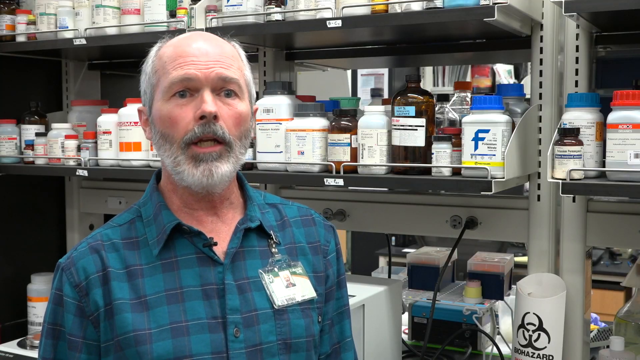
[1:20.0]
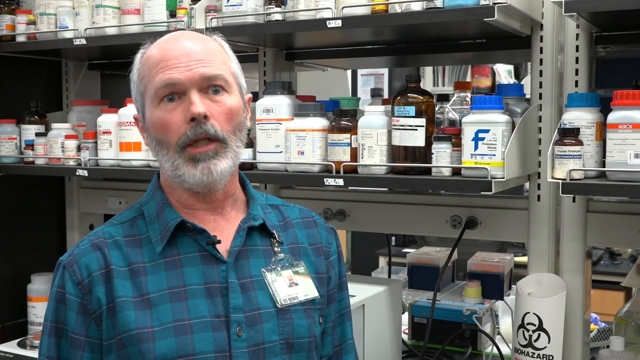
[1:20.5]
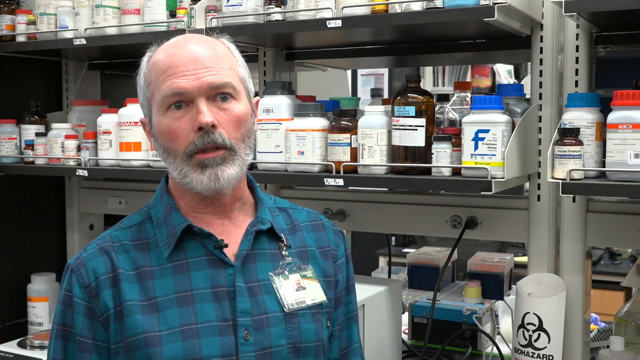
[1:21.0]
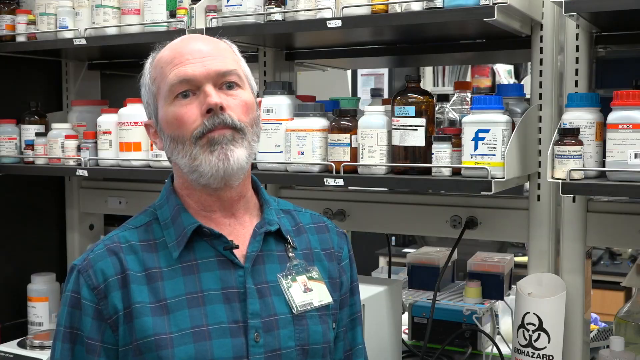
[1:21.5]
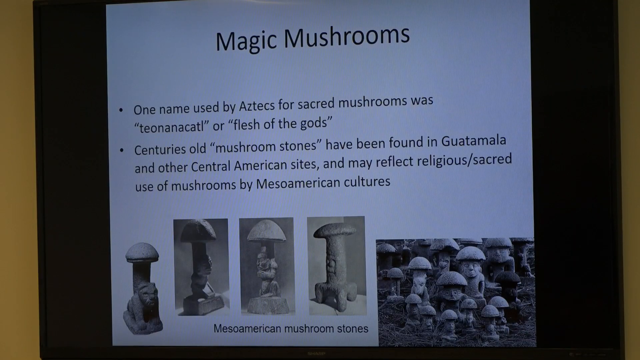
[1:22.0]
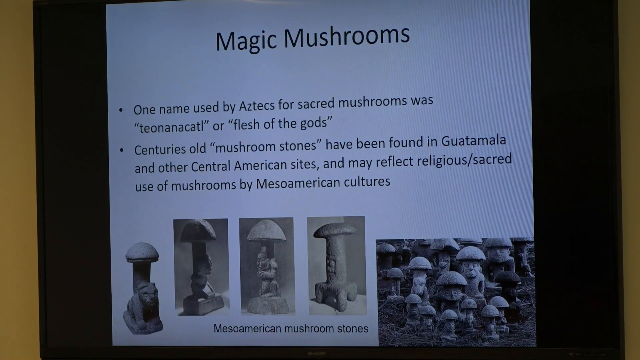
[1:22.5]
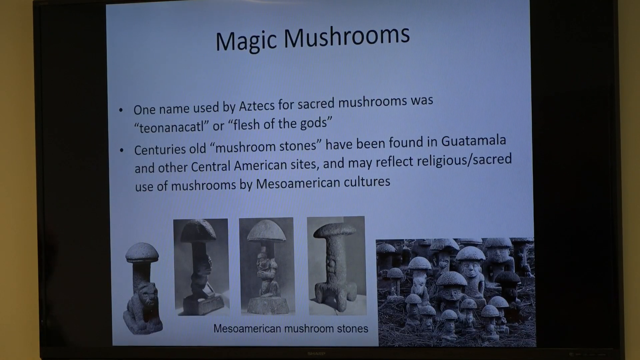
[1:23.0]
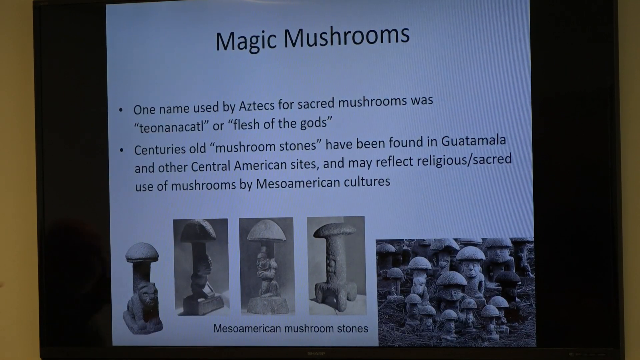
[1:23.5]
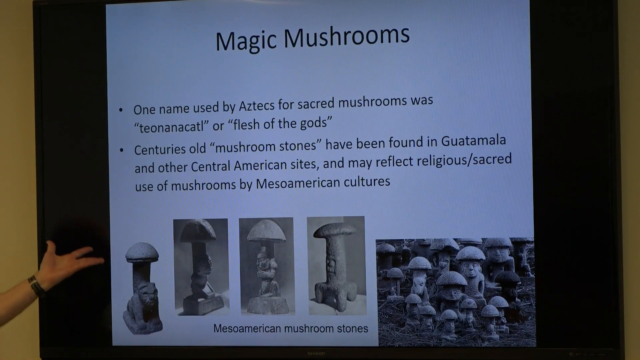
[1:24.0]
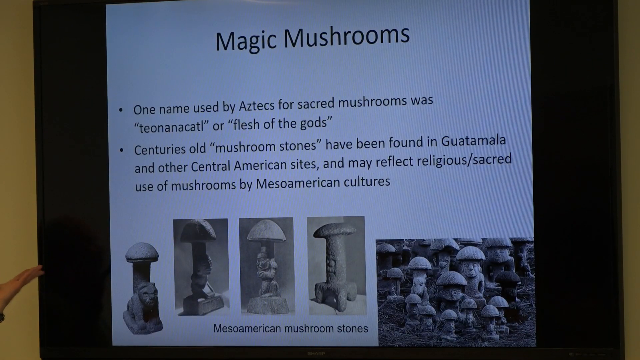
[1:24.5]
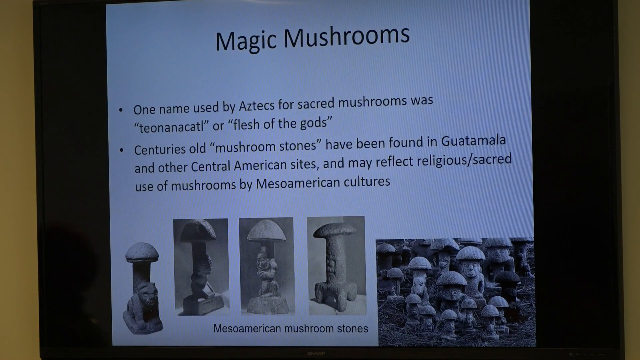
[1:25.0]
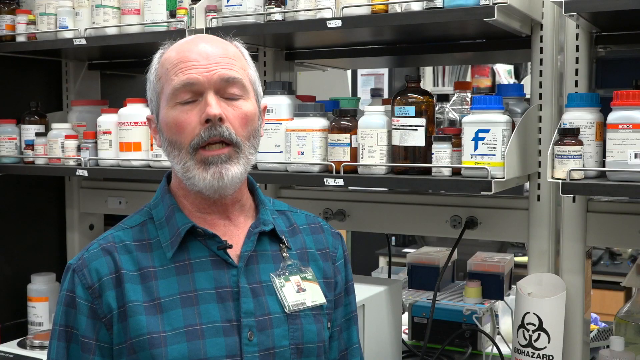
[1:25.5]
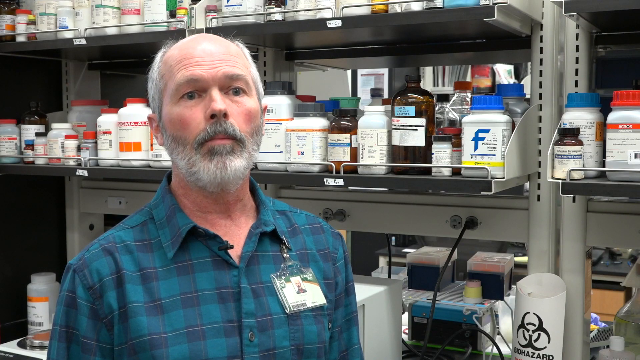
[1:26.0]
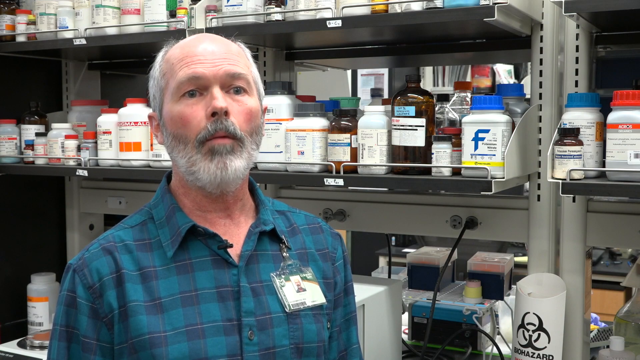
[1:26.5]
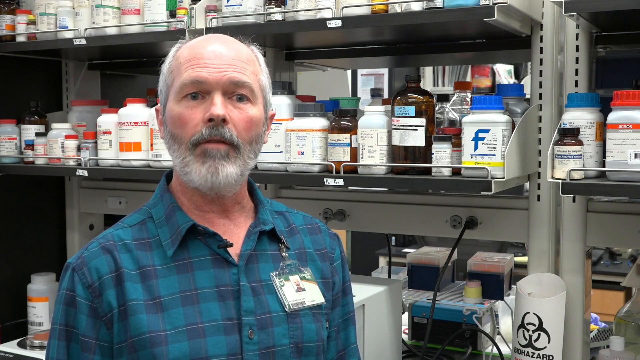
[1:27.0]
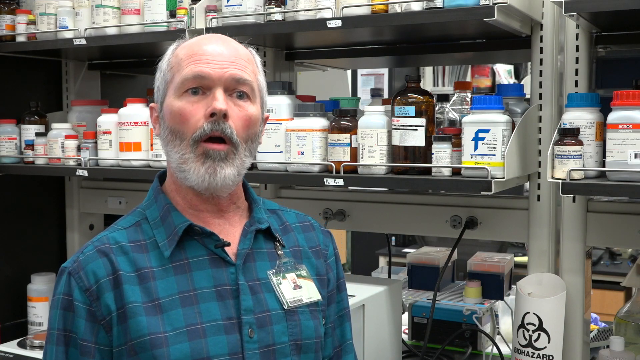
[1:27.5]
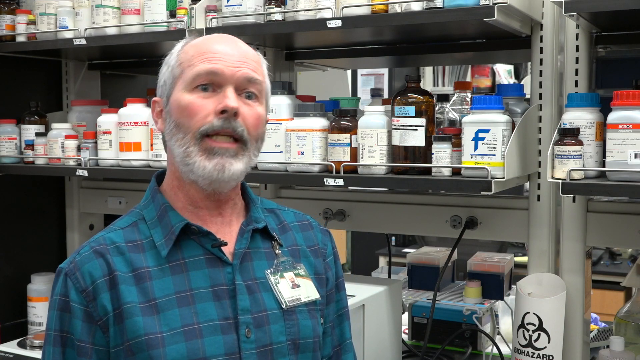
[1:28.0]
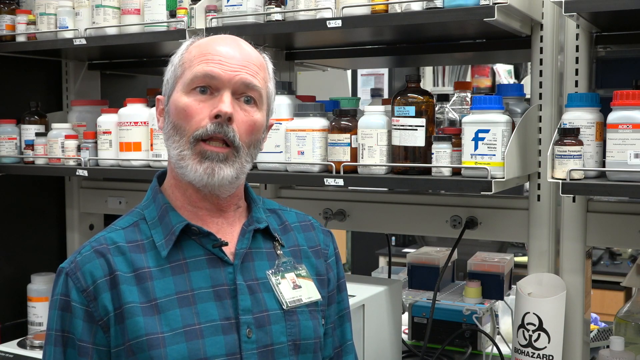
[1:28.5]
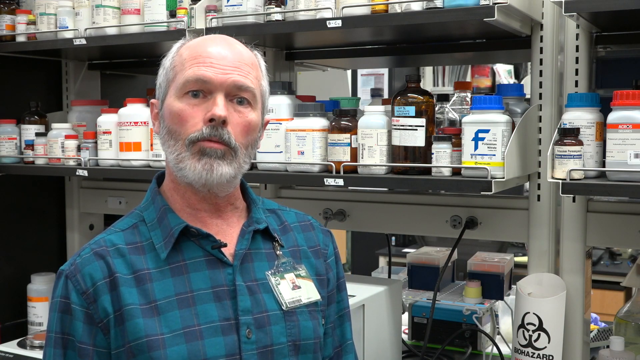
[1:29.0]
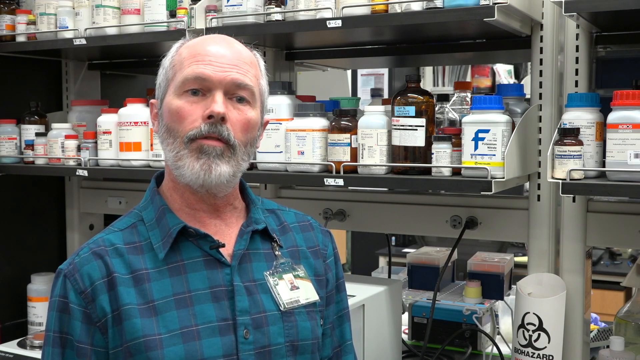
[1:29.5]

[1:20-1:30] Dr. Ken Kassenbrock speaks in what looks like it is possibly his lab. The video then shows the presentation screen, which reads "magic mushrooms" and gives information about how long people have used them, the cultures and religions that have used magic mushrooms over generations, and the different reasons they have used them. The video returns to him in what appears to be his lab, with lab equipment and a lot of bottles behind him.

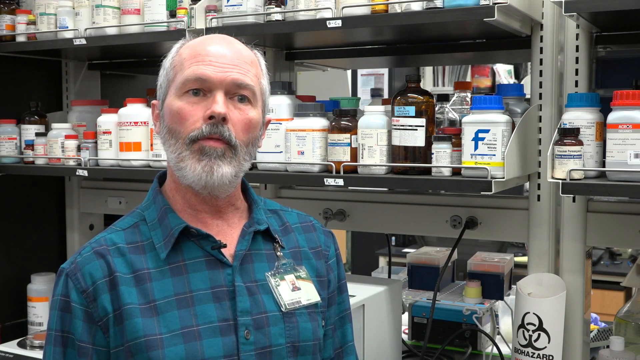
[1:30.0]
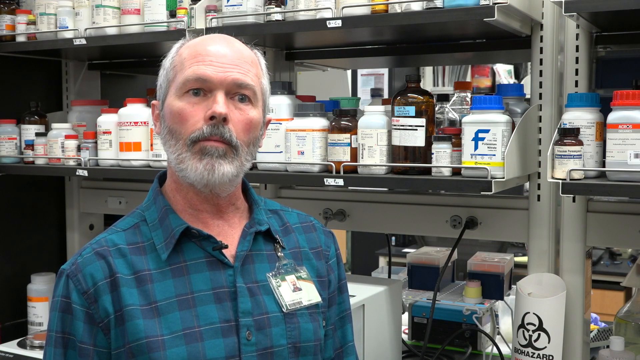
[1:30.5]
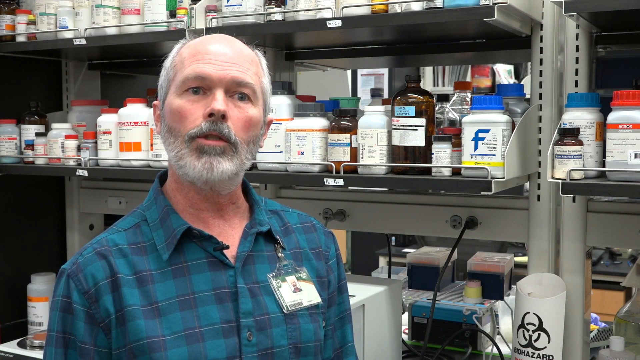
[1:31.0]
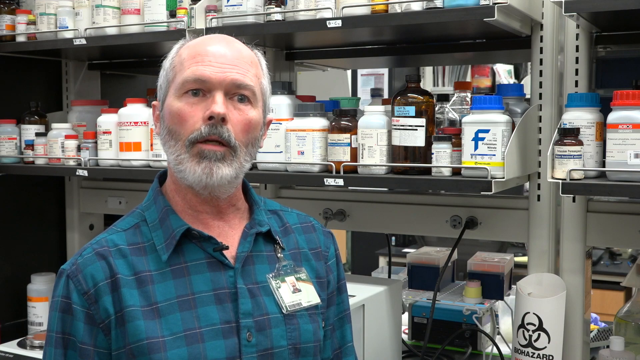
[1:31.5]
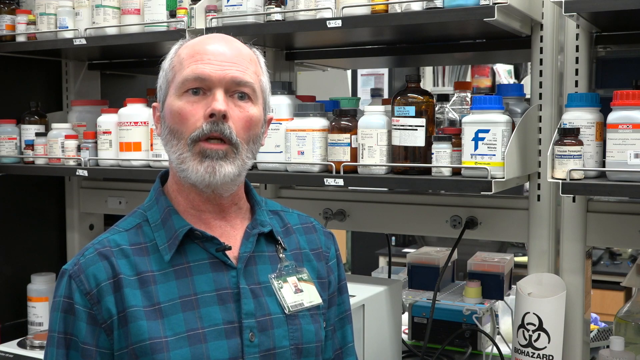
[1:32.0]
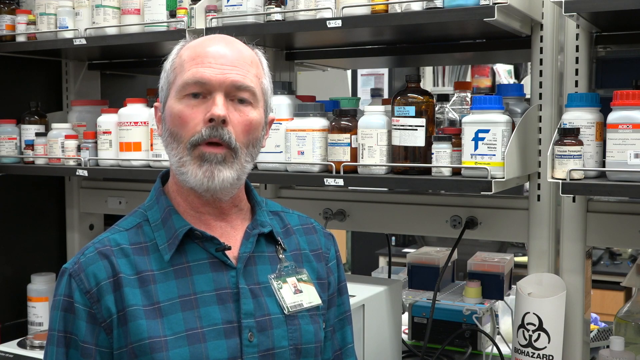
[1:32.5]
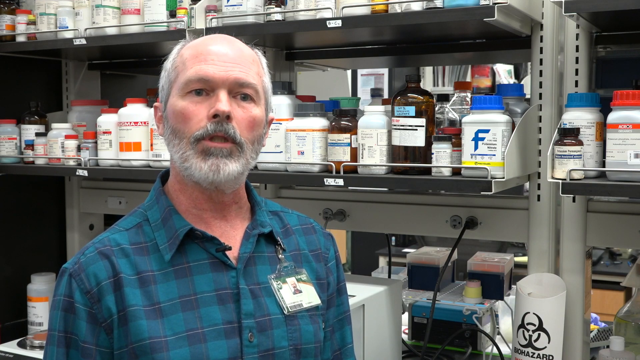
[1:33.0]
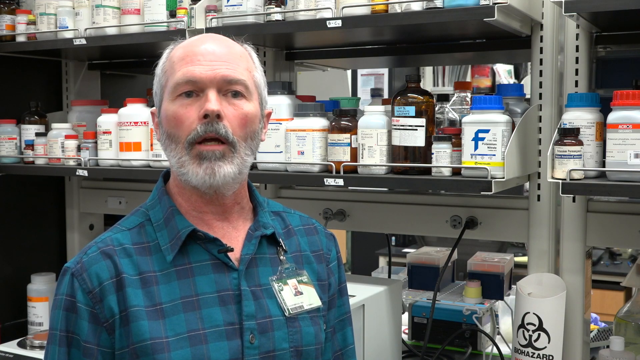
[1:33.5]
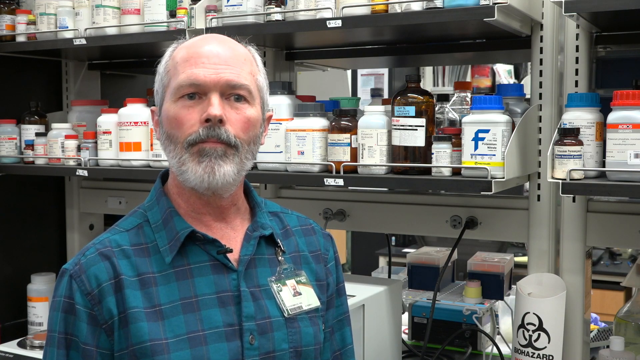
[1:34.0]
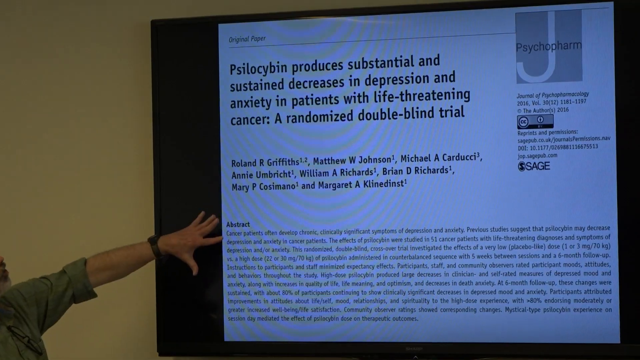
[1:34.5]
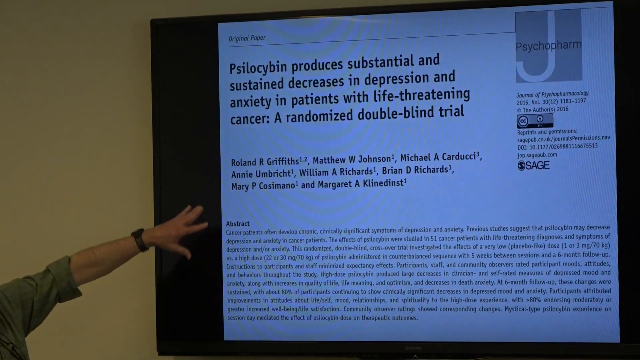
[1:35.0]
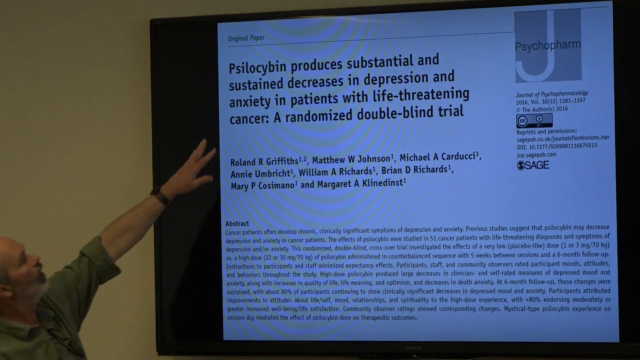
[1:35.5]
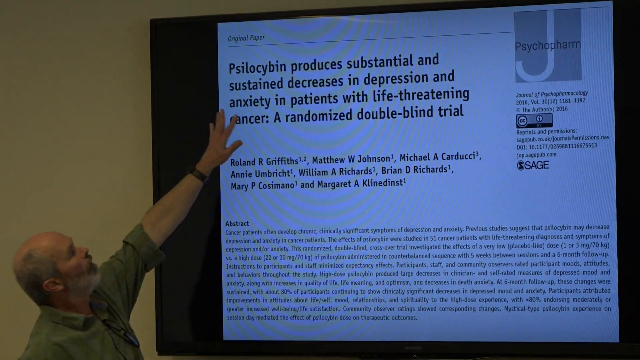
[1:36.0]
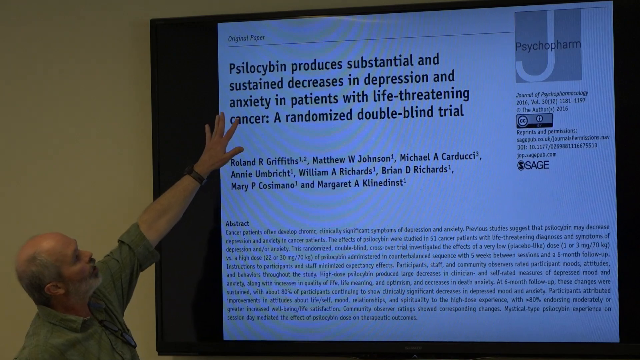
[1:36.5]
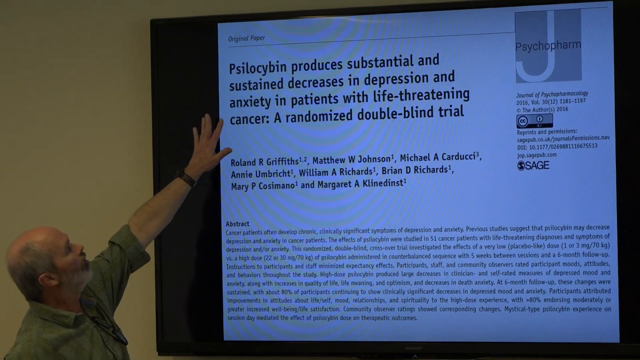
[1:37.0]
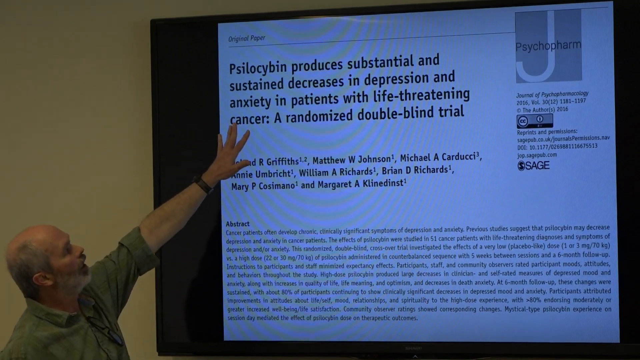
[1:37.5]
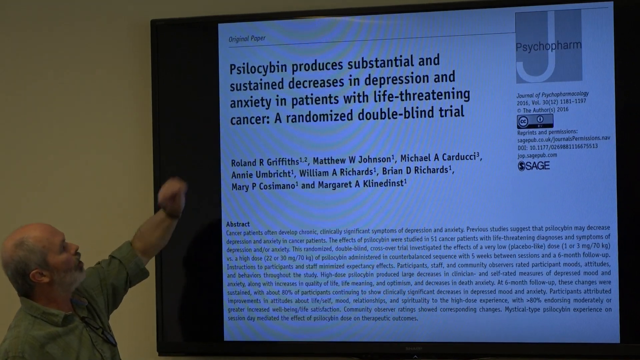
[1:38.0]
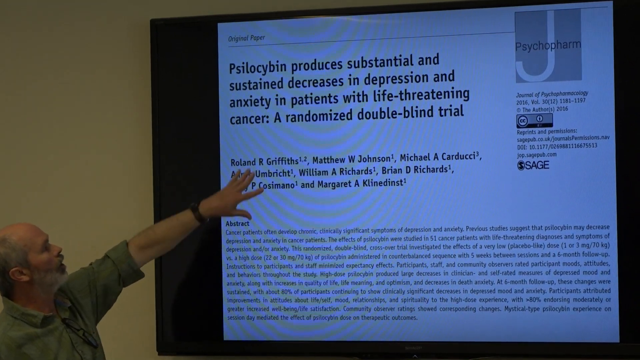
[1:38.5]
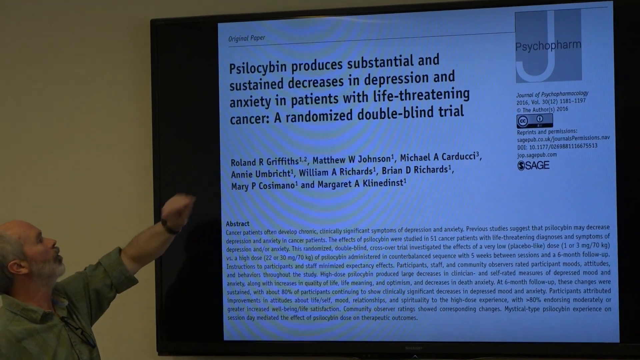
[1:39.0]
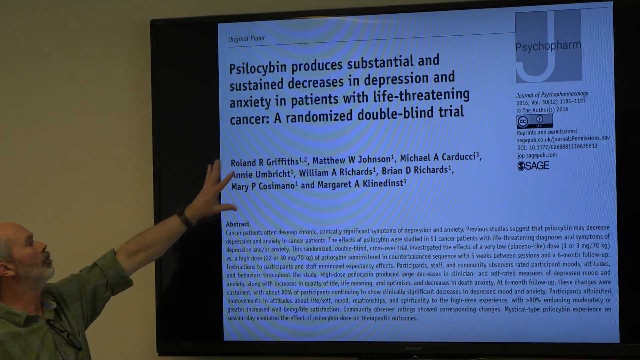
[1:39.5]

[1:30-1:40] Dr. Ken Kassenbrock stands in what is possibly his lab, with bottles and other pieces of lab equipment behind him, and speaks. The video then goes to his presentation, where on the screen he points at "psilocybin produces substantial and sustained decreases in depression and anxiety in patients with life-threatening cancer a randomized double-blind trial". He points to the title and then to the doctors cited right below it, seemingly re-reading it as he points; quite a few doctors are listed.